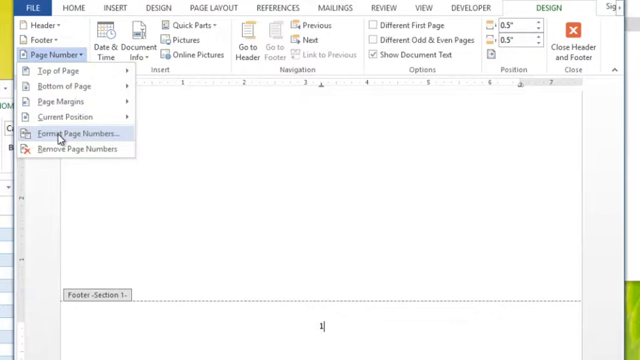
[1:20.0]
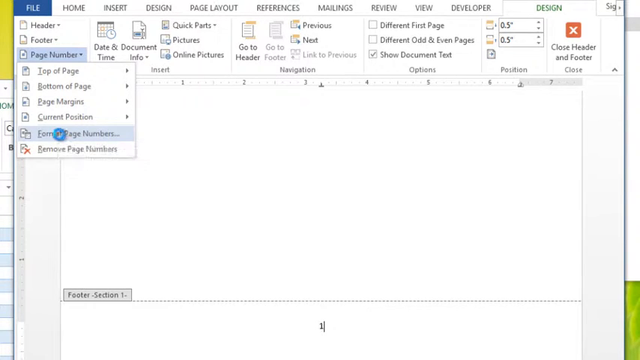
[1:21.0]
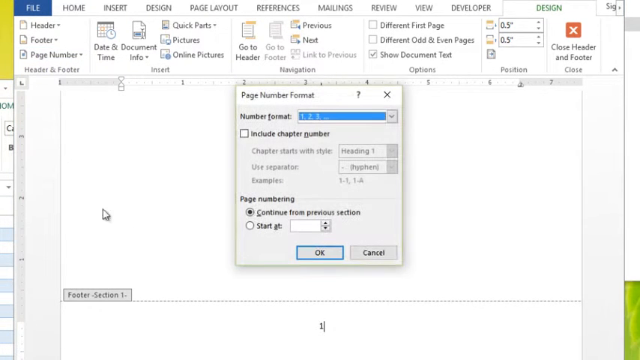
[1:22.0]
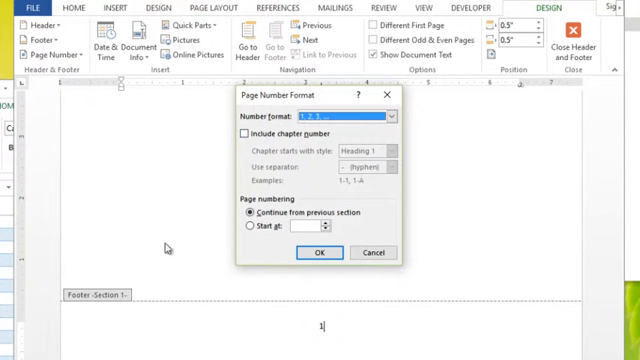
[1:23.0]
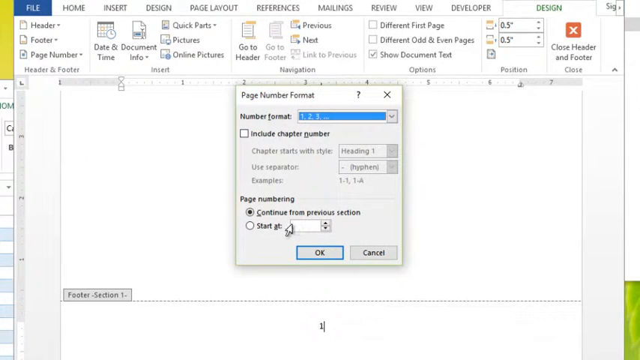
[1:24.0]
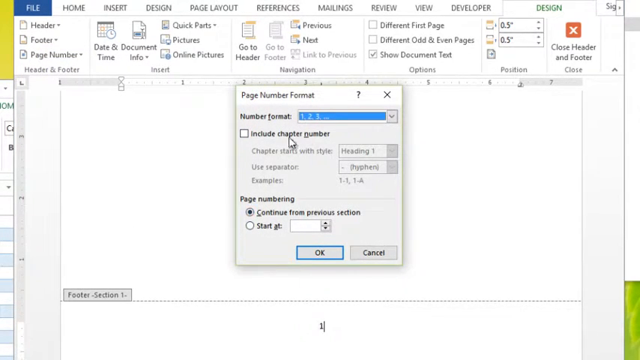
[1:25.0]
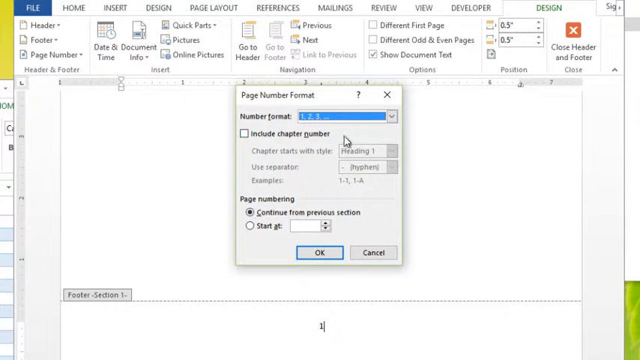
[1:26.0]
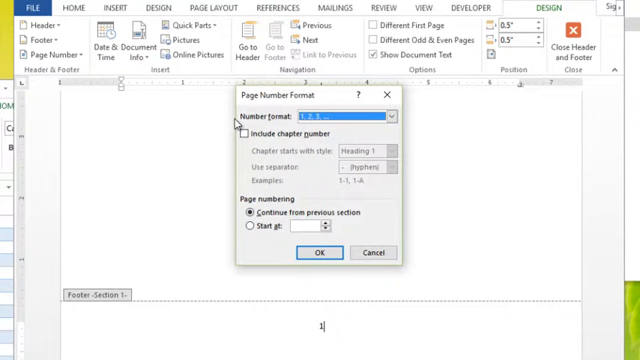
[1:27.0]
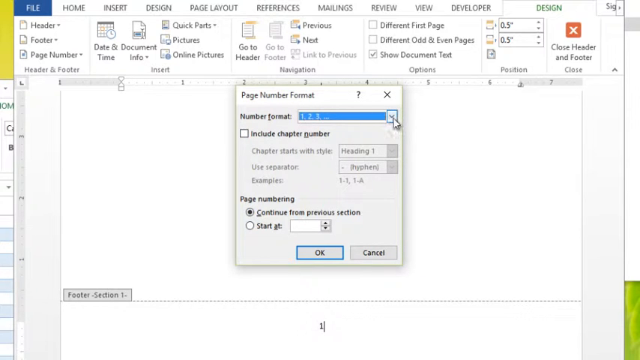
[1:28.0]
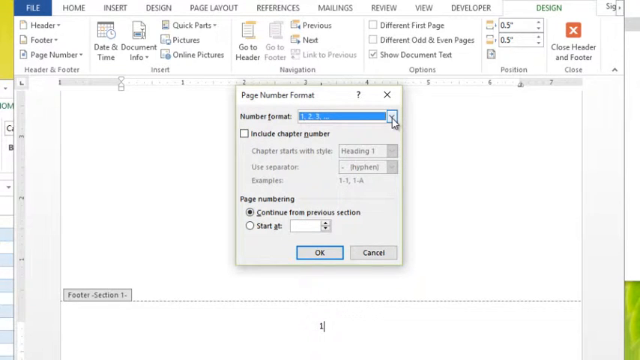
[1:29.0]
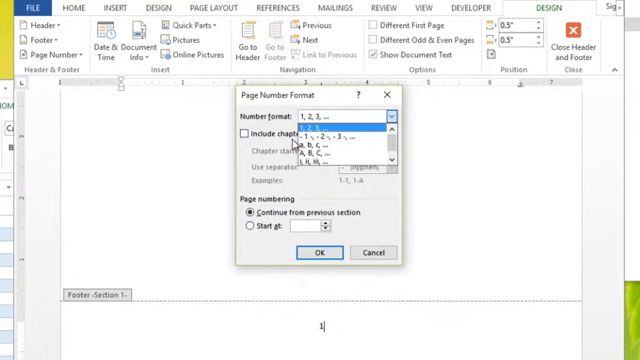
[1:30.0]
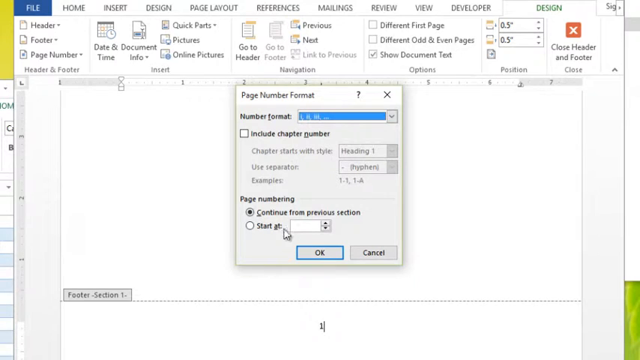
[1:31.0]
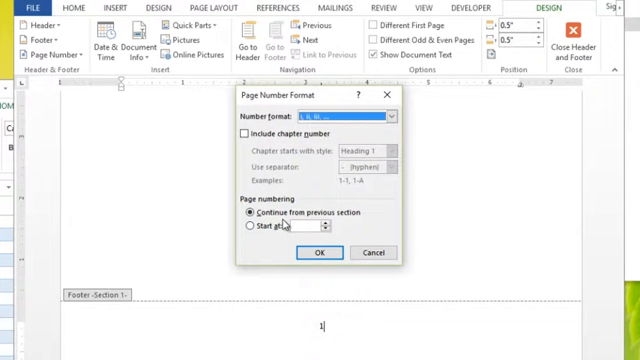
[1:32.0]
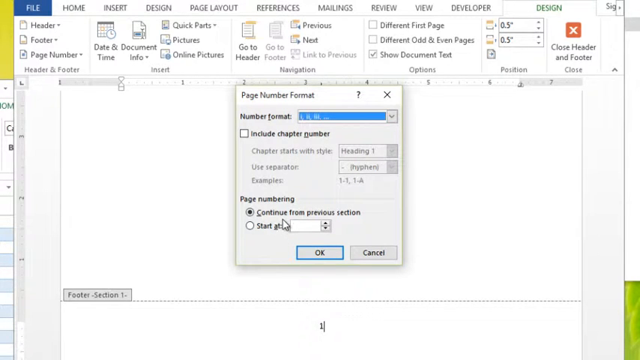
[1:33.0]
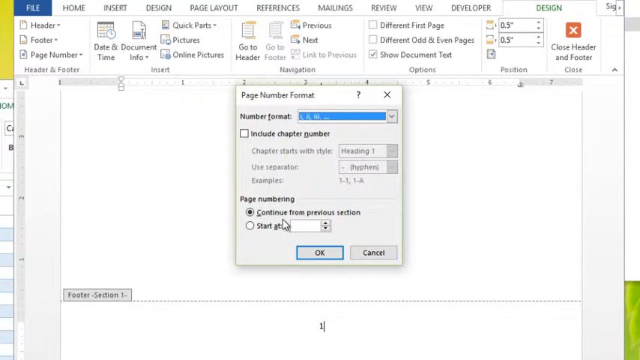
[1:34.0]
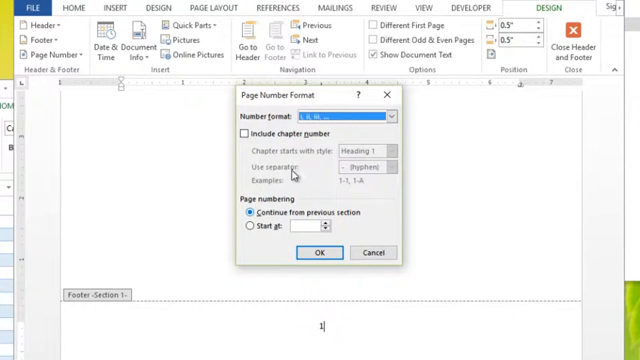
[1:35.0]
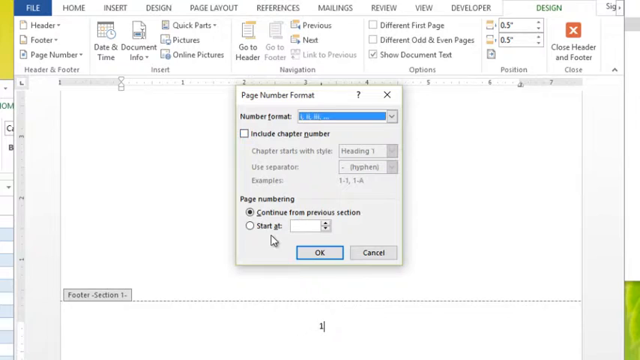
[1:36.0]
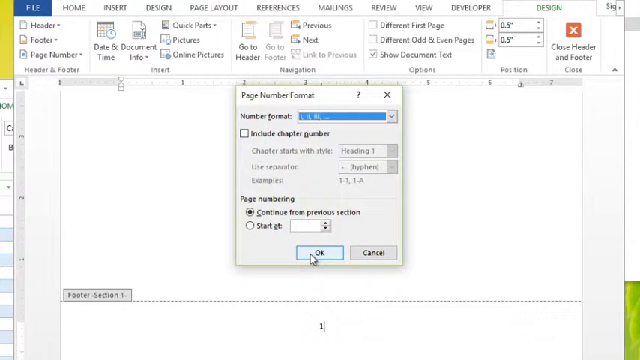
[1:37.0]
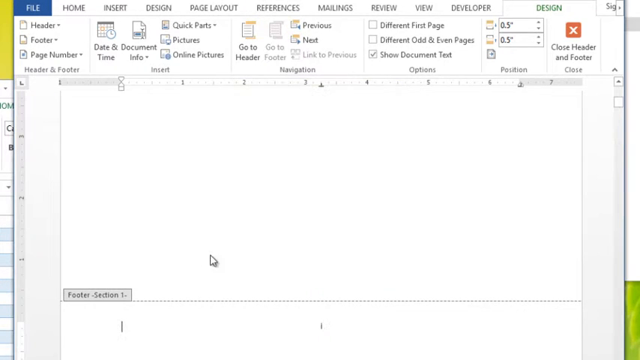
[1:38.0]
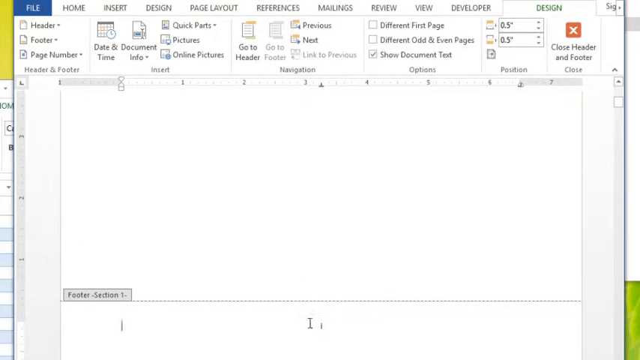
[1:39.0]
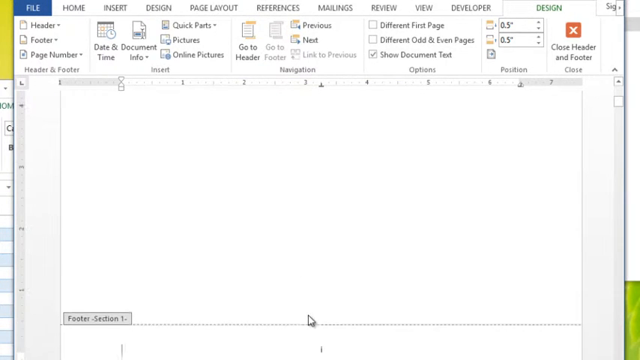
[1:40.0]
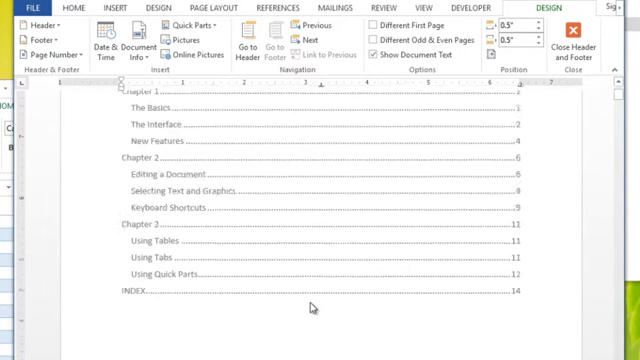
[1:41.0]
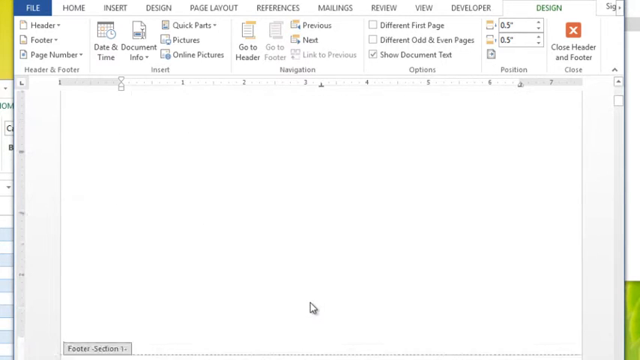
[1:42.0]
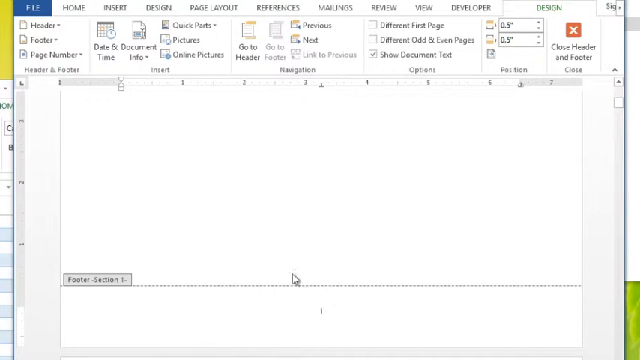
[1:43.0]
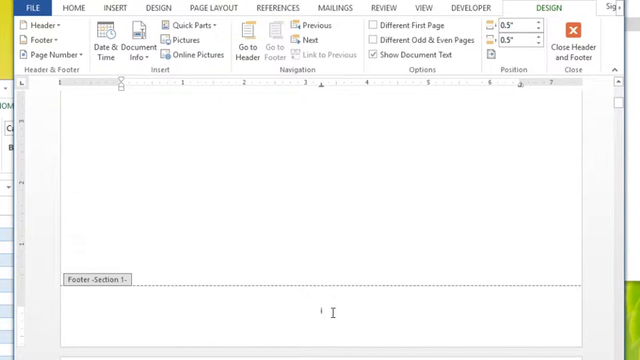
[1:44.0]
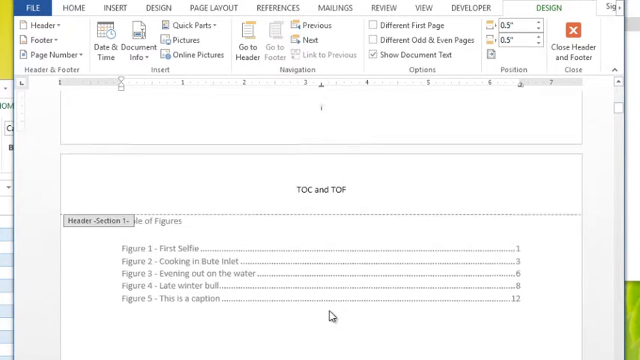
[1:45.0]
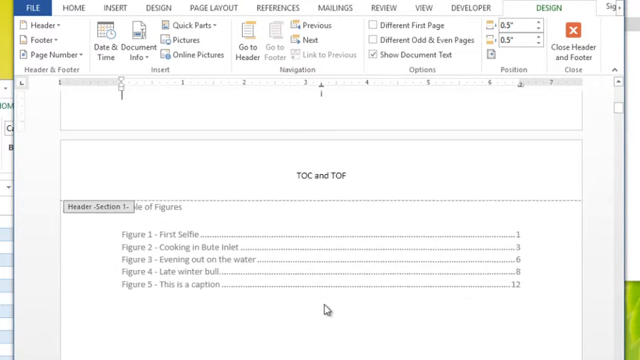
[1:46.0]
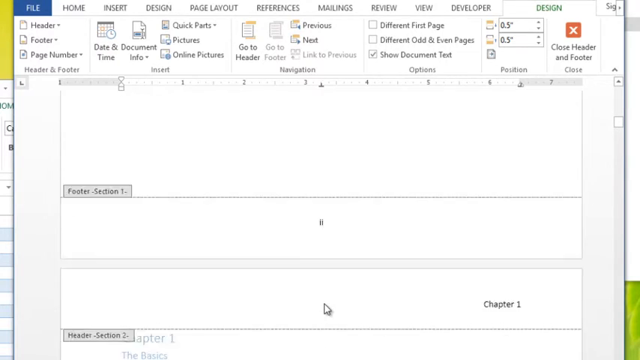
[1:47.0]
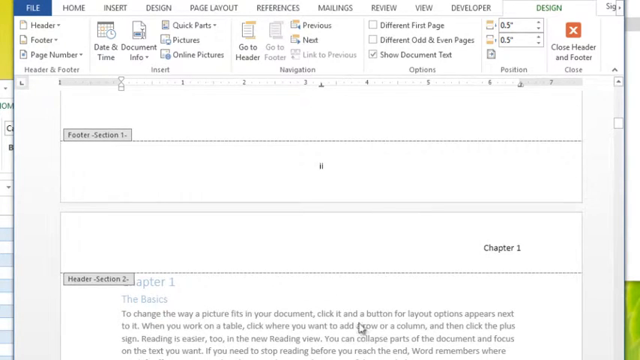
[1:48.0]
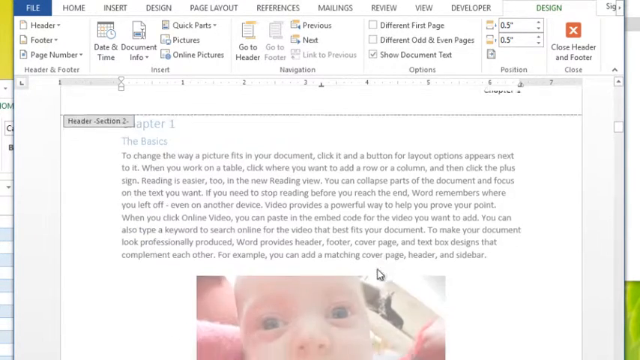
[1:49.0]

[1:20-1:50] A page number format option is clicked, then an arrow, which opens a drop-down list of the different number formats, including letters such as a, b and c. Roman numerals appear to be selected, and OK is clicked. The page number then shows as Roman numeral one at the bottom of a page, followed by Roman numeral two on the next page.